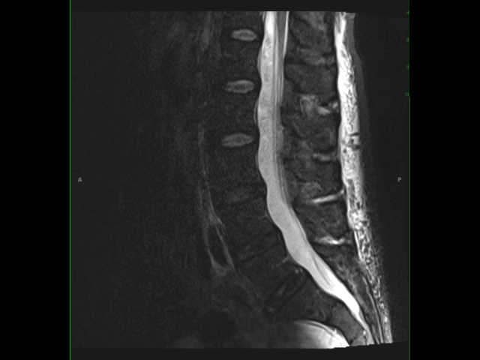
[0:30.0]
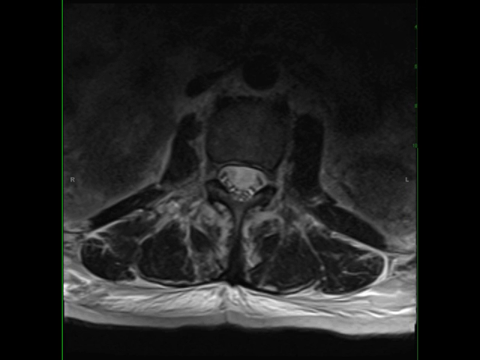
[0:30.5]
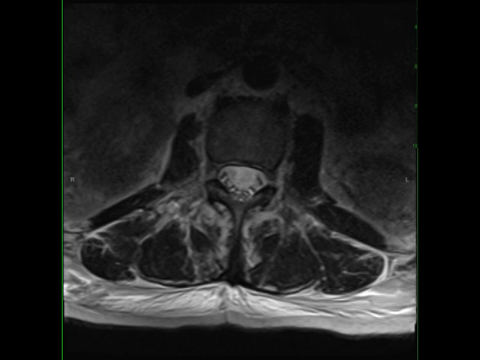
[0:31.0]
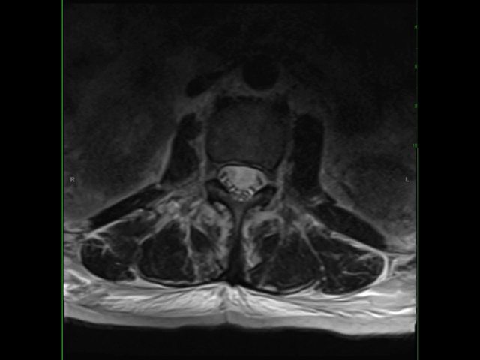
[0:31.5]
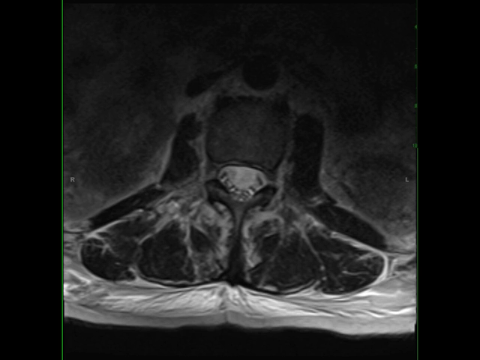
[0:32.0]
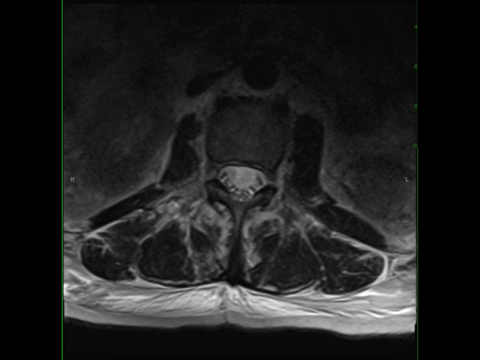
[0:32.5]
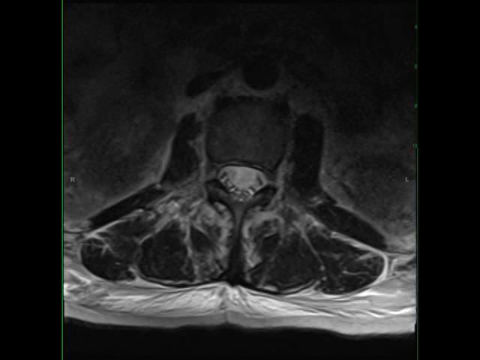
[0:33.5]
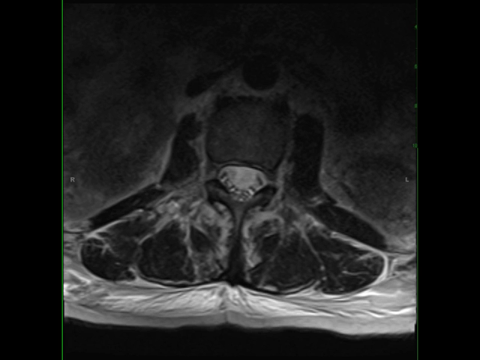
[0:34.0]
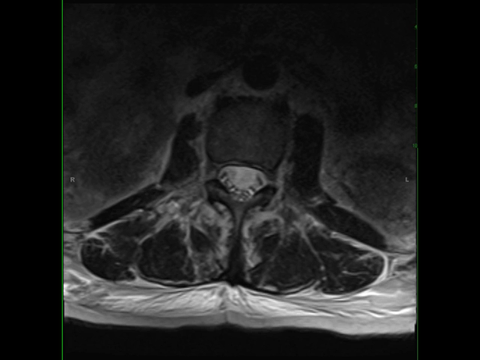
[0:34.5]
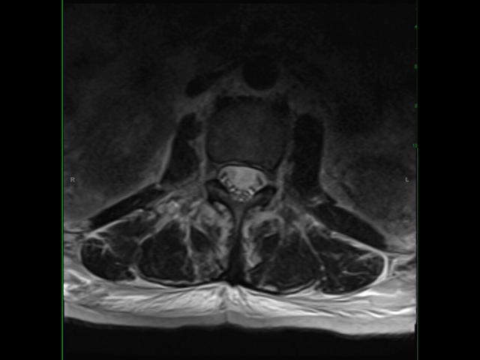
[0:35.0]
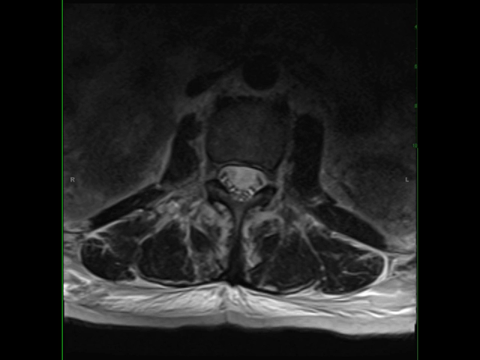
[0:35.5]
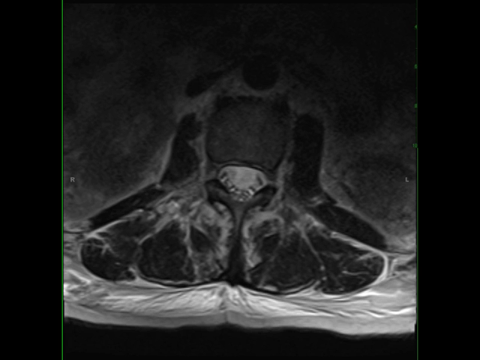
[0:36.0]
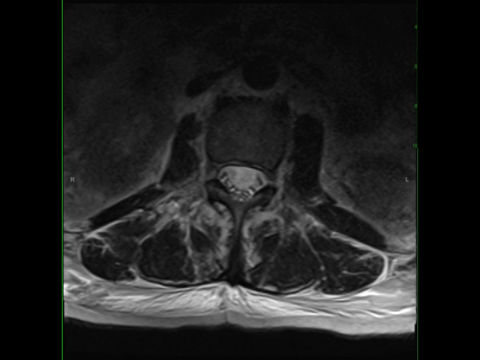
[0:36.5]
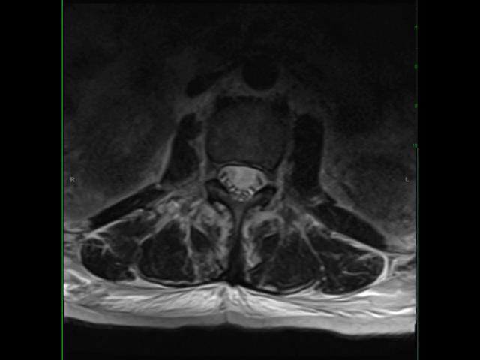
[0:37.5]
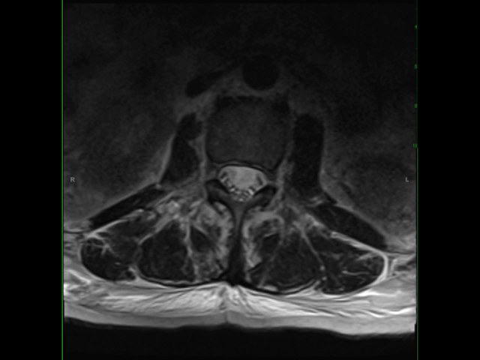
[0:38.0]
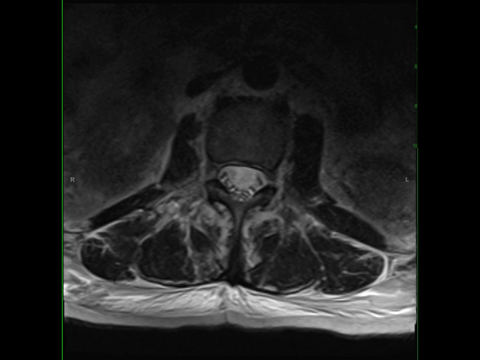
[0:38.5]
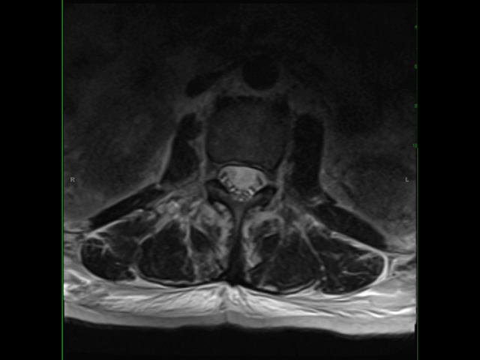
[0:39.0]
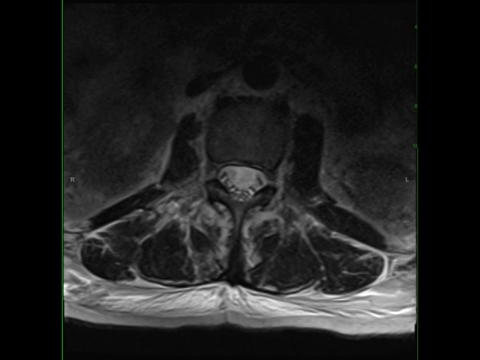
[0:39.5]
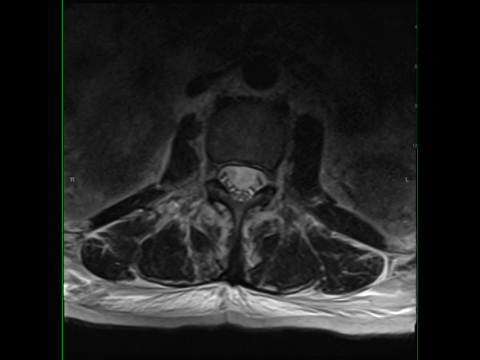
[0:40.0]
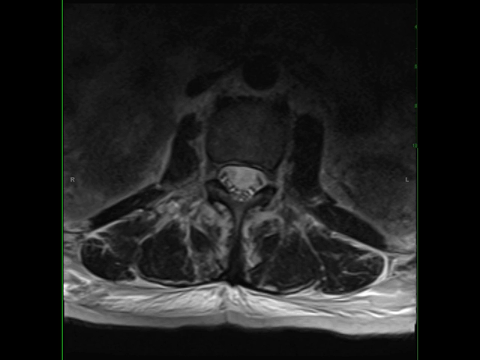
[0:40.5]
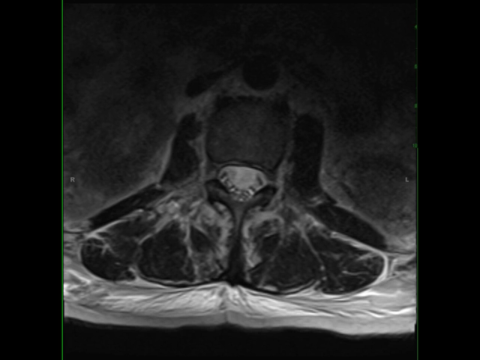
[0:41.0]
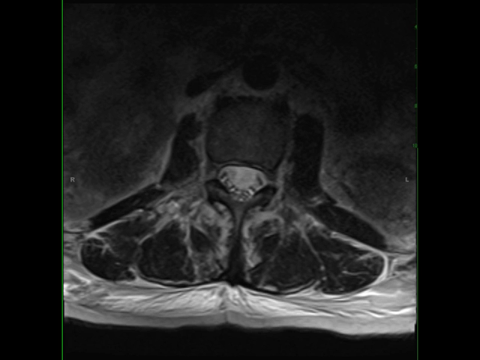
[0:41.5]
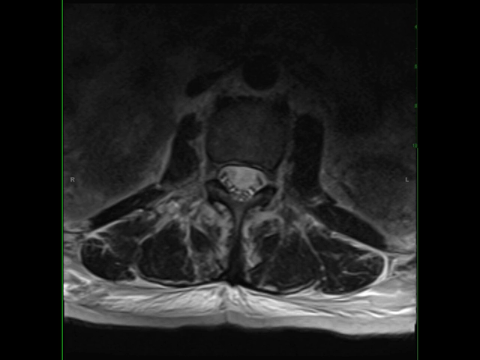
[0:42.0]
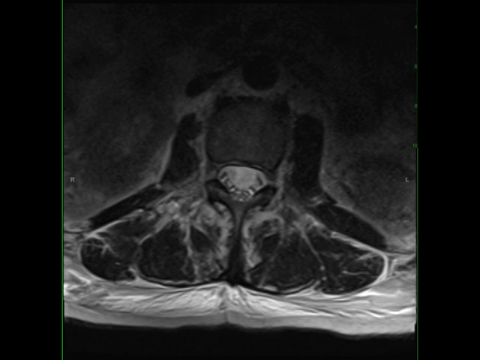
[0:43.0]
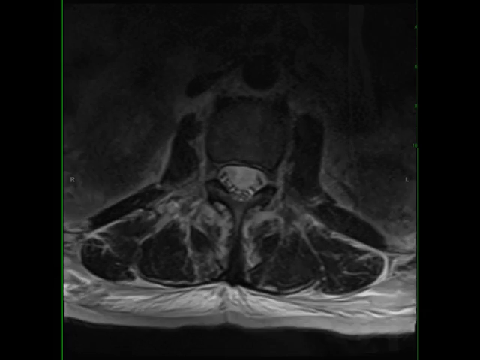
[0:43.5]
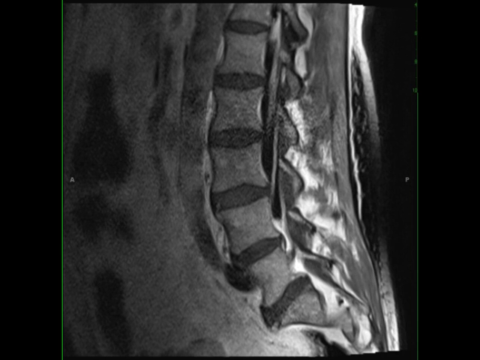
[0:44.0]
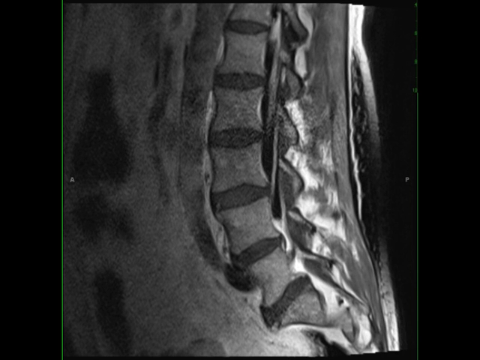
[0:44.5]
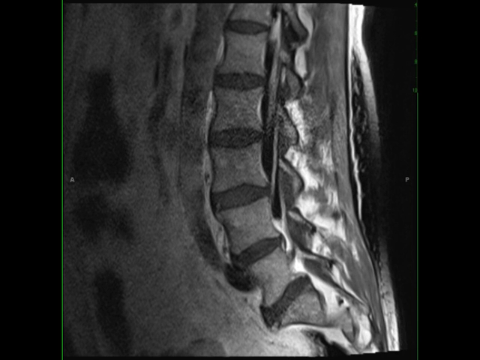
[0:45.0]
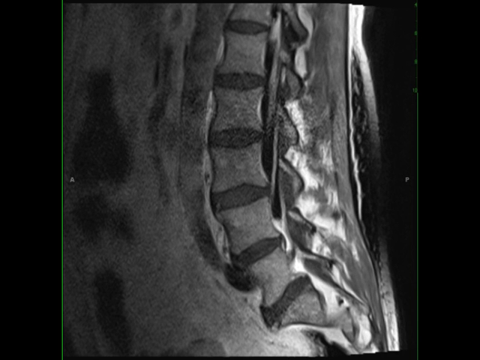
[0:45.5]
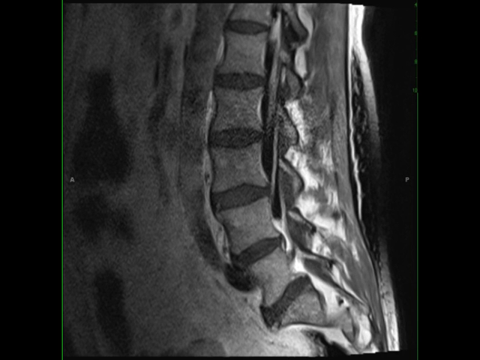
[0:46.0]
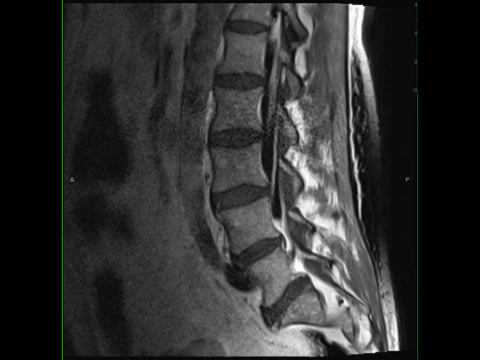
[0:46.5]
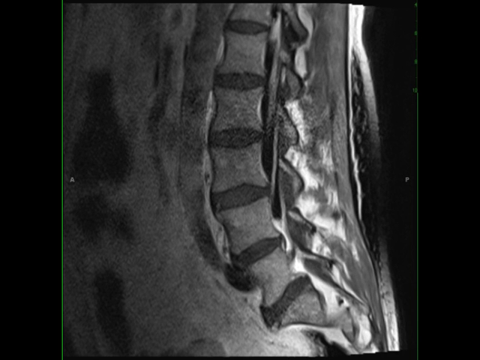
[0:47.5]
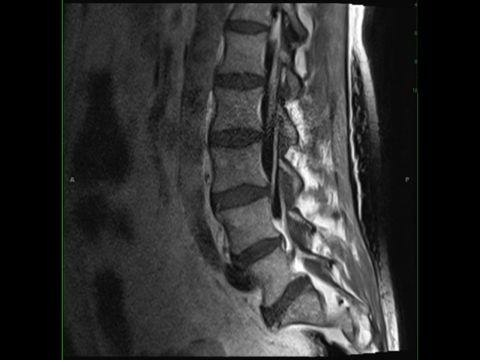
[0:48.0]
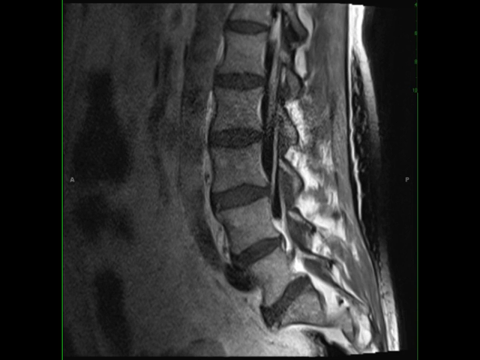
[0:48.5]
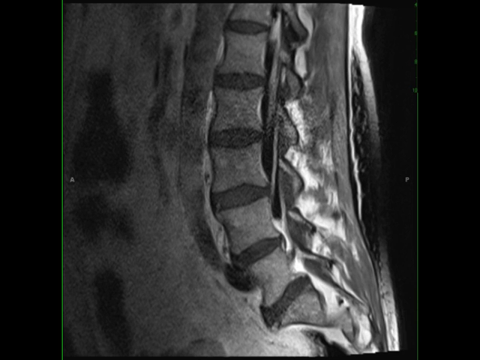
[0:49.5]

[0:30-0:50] What appears to be a side-on view of some sort of animal's spine, possibly an X-ray showing internal structures, is on screen. It is entirely in grayscale except for a strip of green on the left side and a thin line on the right side. It looks to be a negative of an X-ray, making much of the detail hard to see, though light can be seen coming from behind. The image then fades to a new image of some different, unidentified internal body part with a shape that is difficult to describe. Next, the image reverts to the spine, this time in full brightness, as seen earlier.